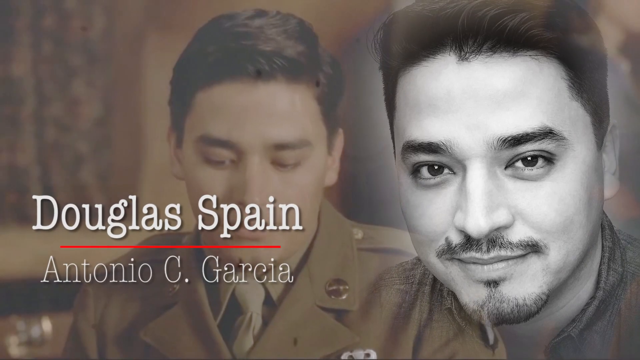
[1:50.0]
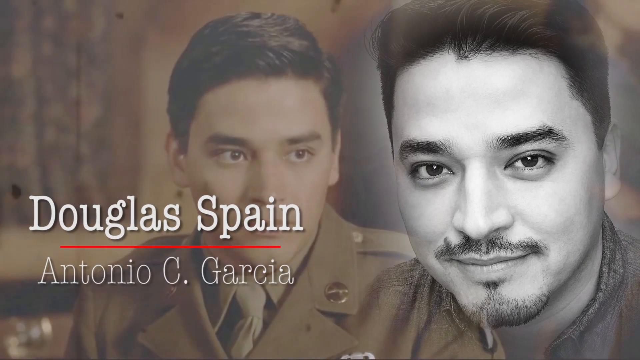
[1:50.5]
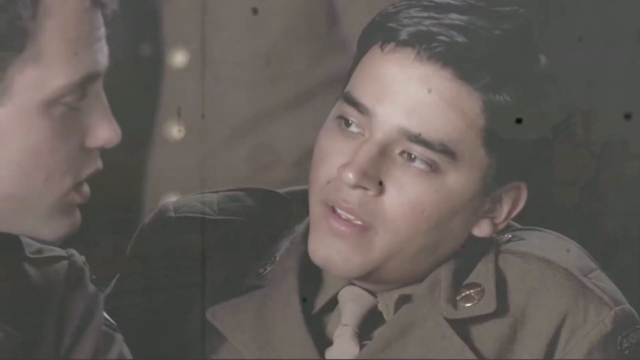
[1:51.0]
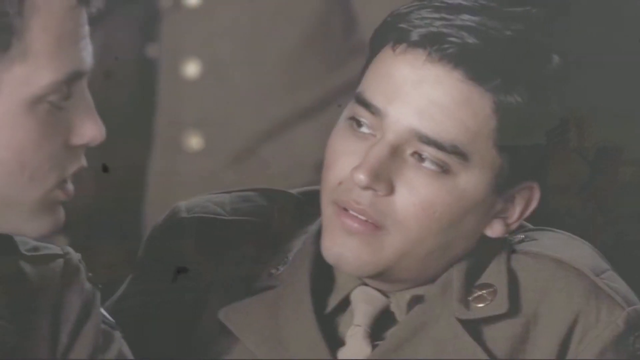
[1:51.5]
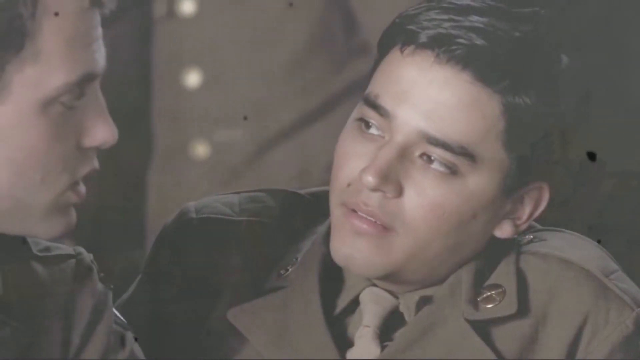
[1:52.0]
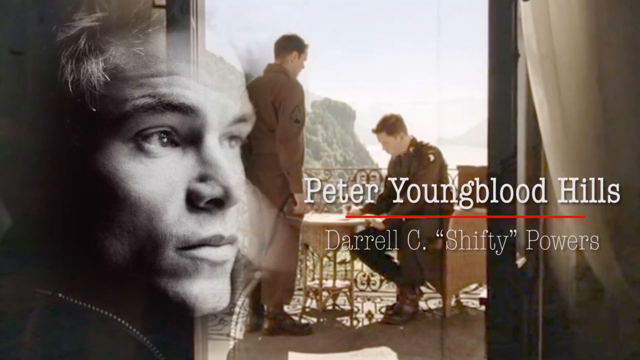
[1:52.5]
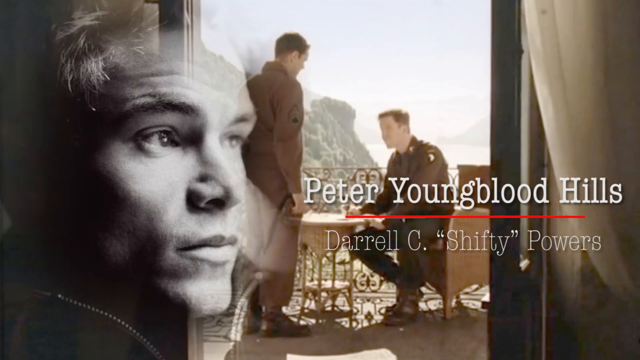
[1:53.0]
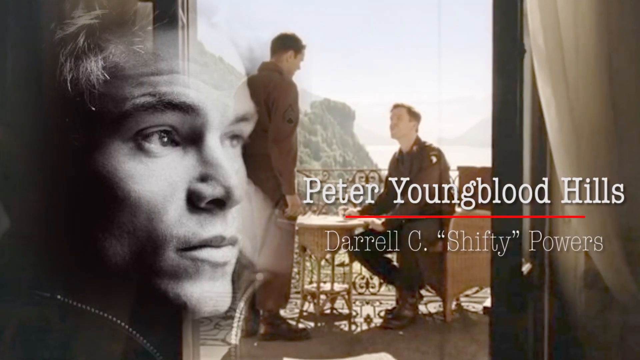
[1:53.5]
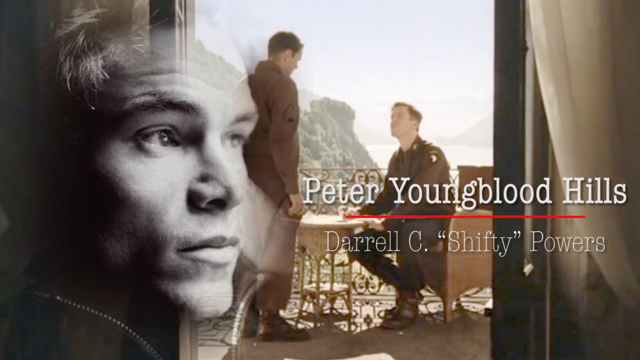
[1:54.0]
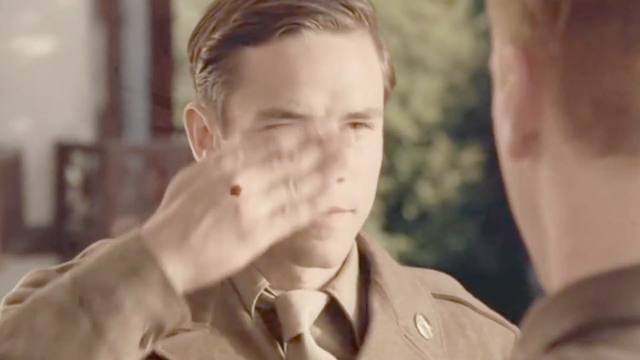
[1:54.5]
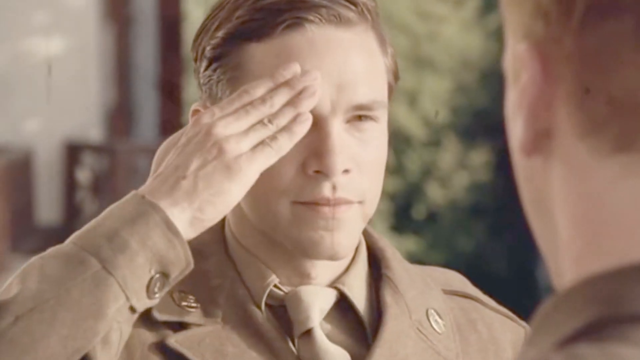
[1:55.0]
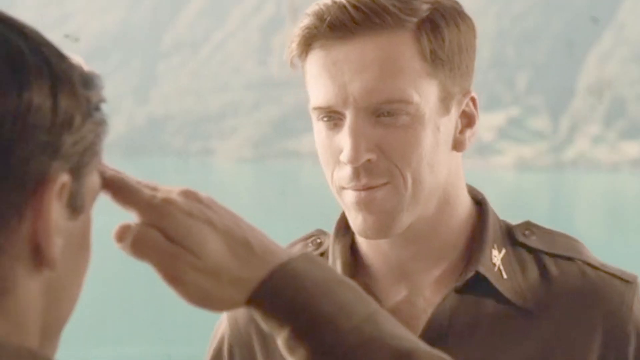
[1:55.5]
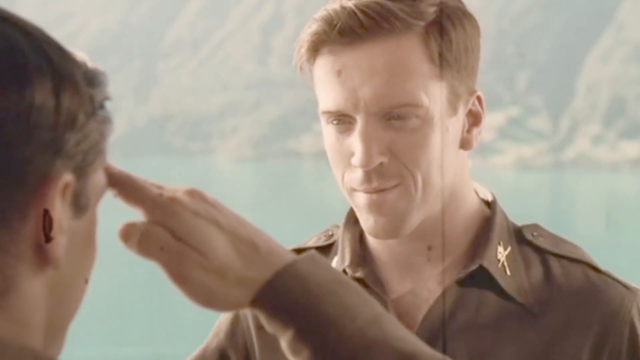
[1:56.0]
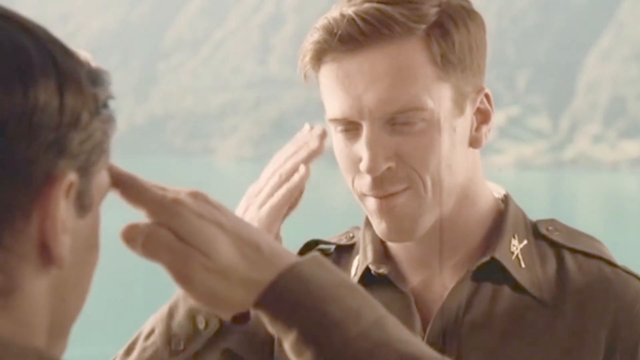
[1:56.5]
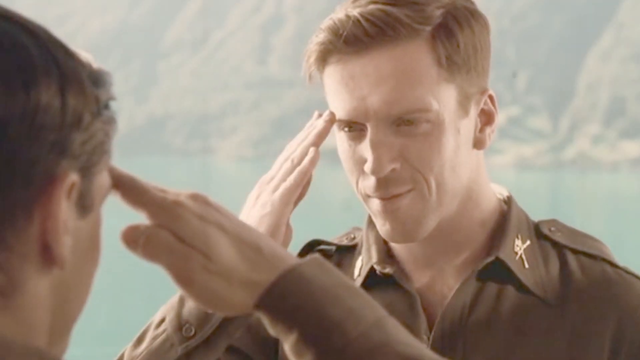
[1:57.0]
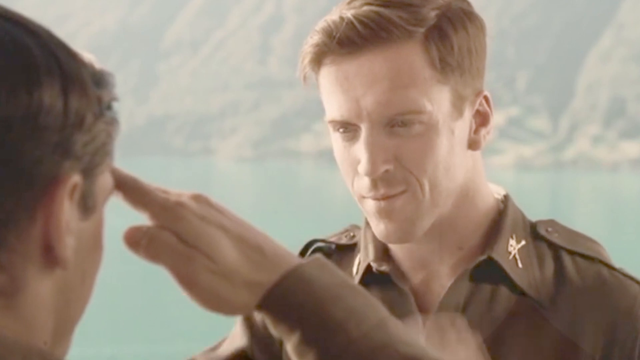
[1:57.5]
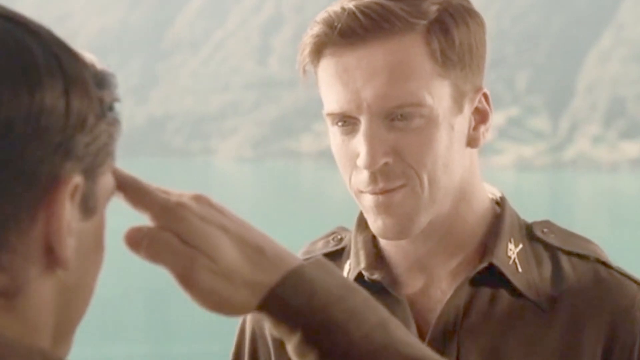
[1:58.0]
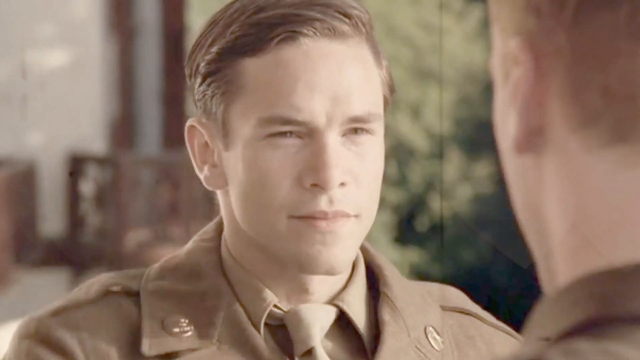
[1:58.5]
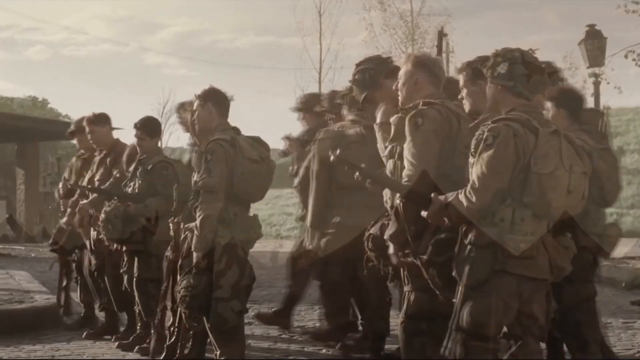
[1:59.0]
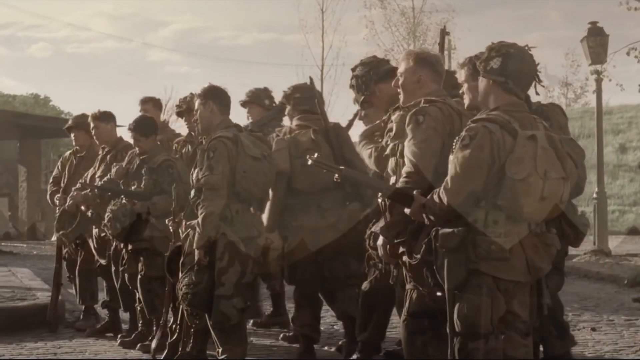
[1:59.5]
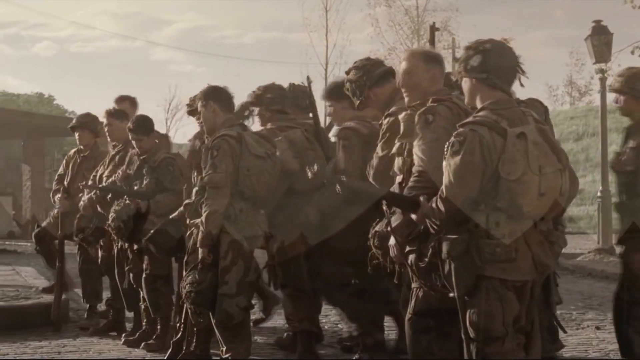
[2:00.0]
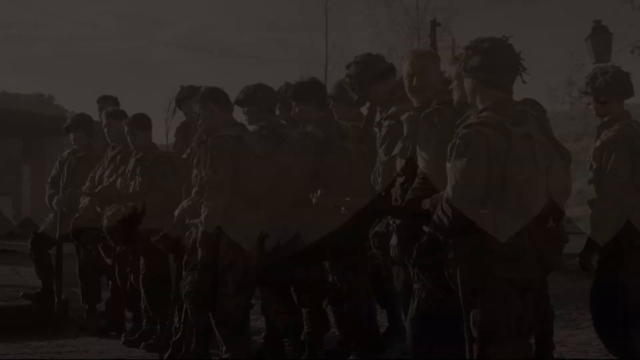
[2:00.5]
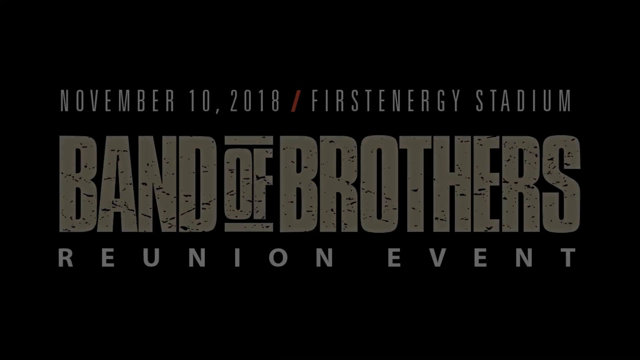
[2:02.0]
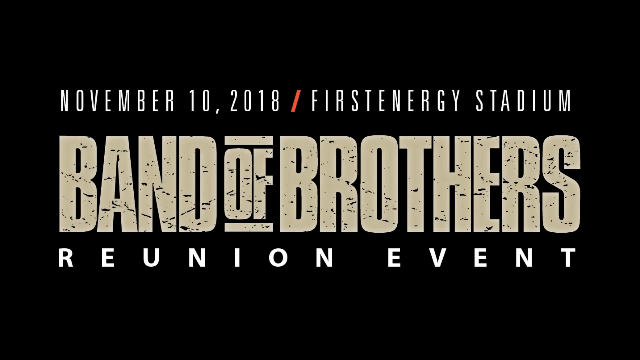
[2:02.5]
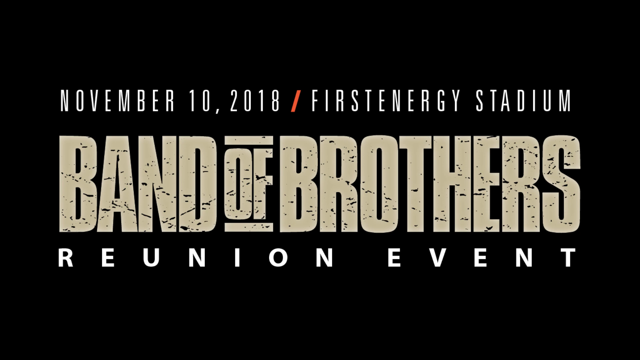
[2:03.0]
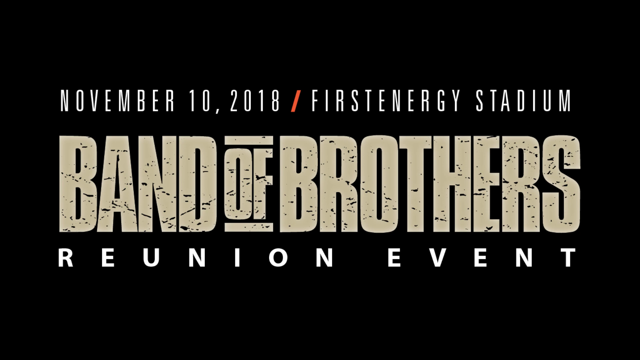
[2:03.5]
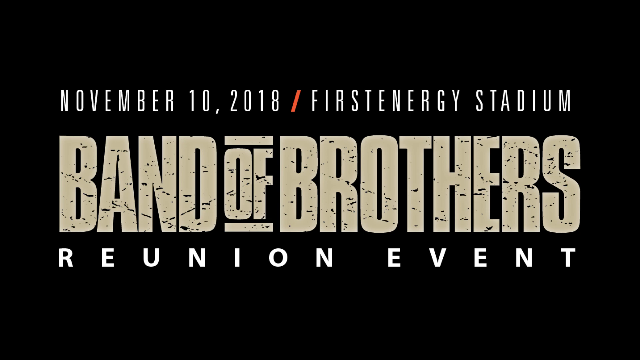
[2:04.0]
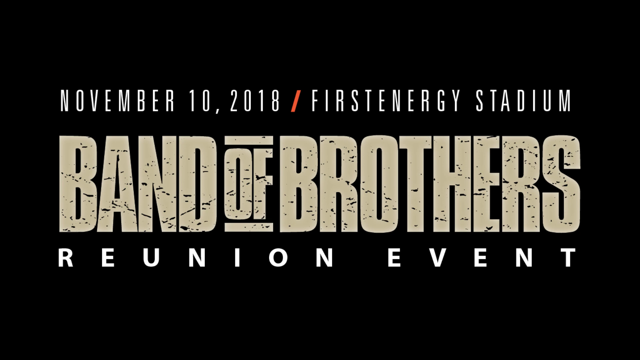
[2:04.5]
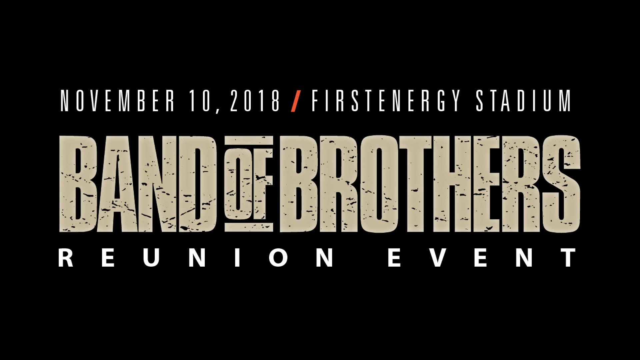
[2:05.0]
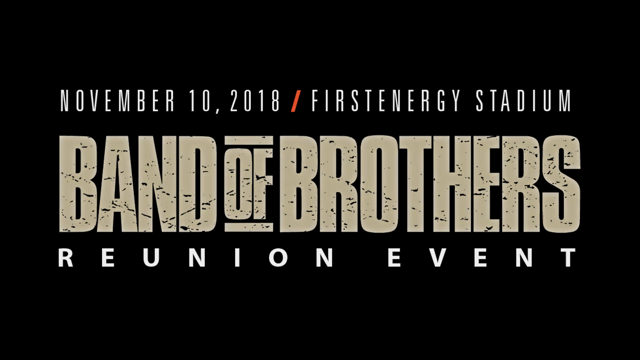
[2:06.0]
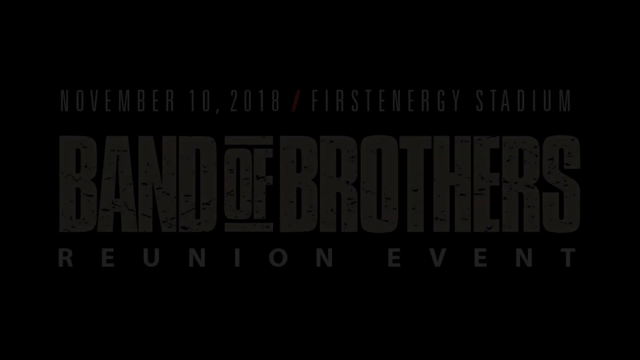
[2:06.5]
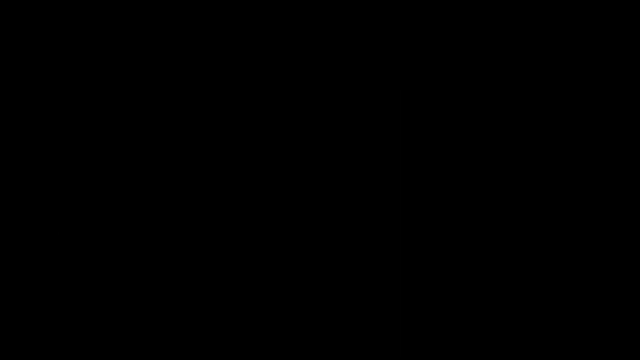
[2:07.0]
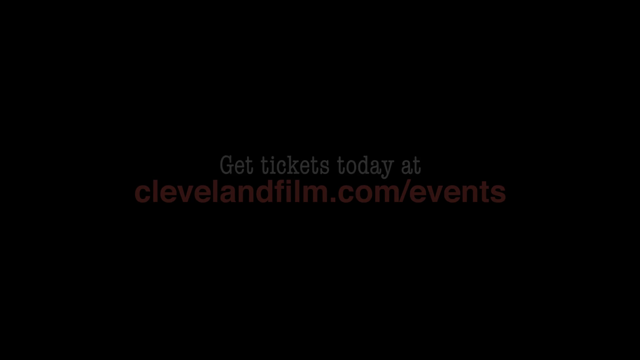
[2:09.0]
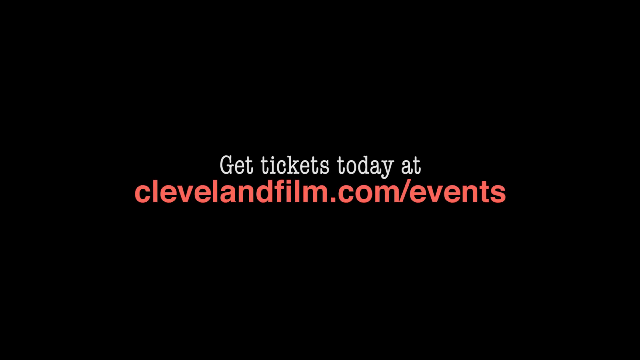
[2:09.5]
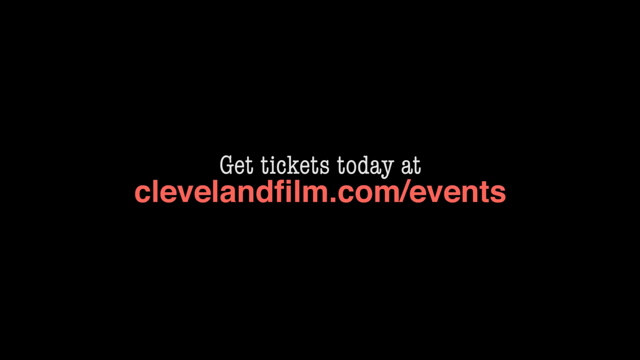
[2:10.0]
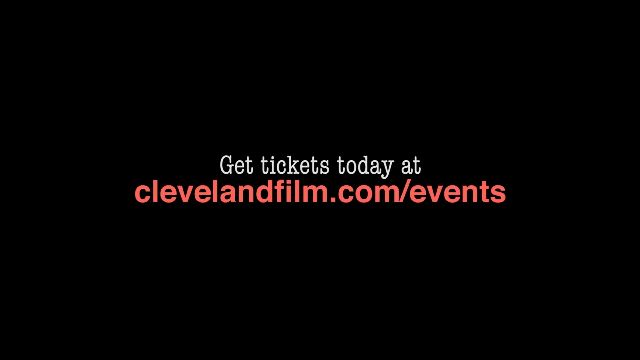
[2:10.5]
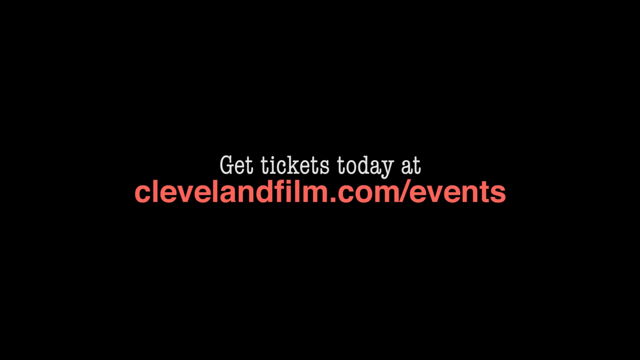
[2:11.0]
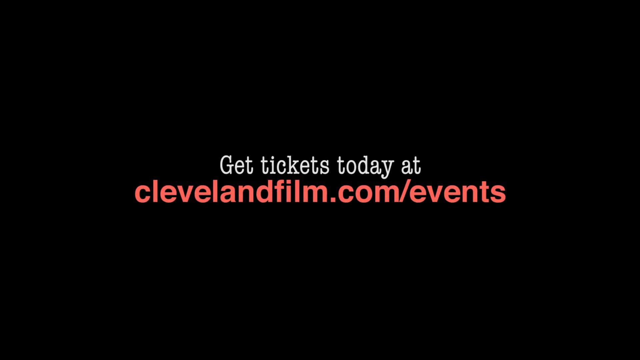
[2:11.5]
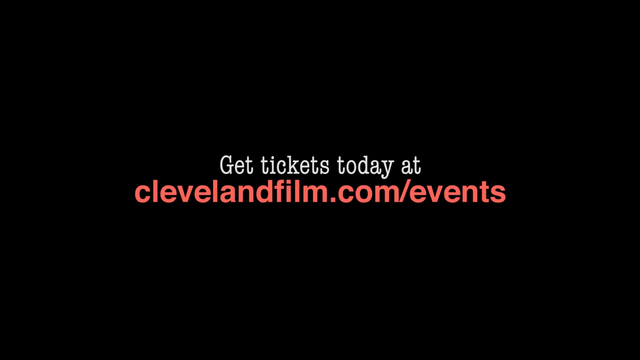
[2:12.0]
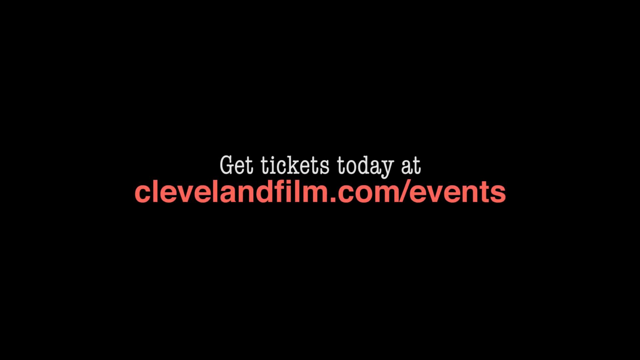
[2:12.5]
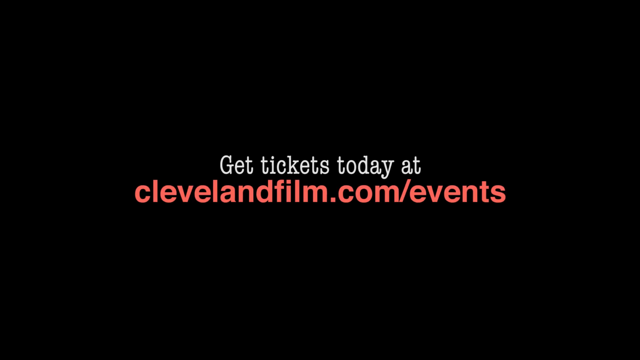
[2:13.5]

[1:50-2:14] More actor credits appear, including Peter Youngblood Hills as a soldier who is saluting or being saluted by another soldier, with water and mountainous areas in the background; the two salute each other. Footage shows a group of other soldiers under gray, cloudy skies. The video then presents a reunion event, probably of real soldiers and the actors, on November 10th, 2018, at First Energy Stadium, with the text "get tickets today, clevelandfilm.com".